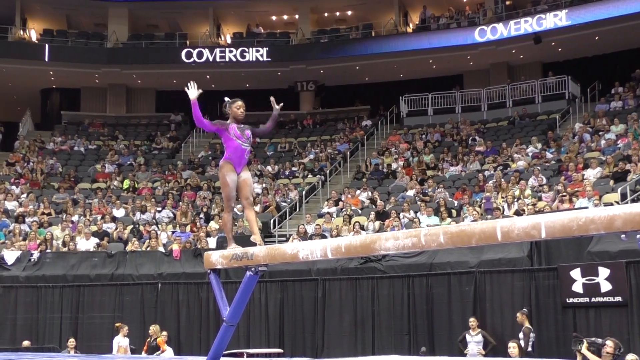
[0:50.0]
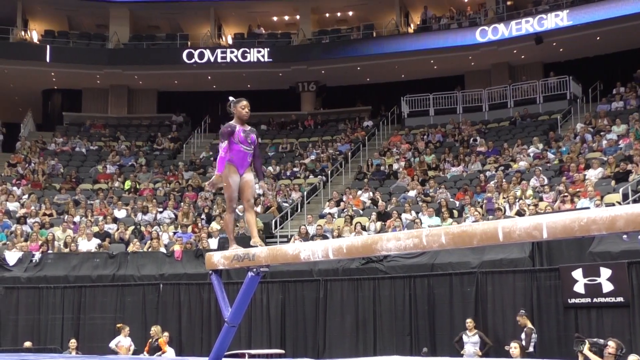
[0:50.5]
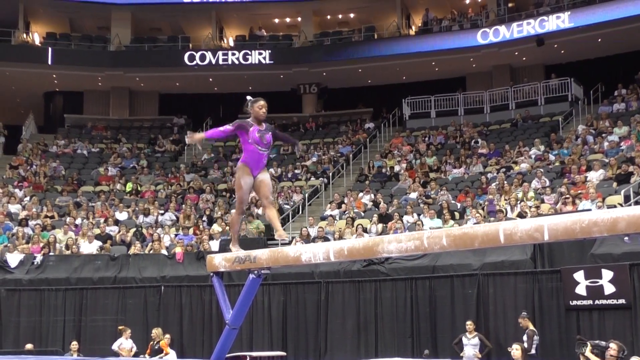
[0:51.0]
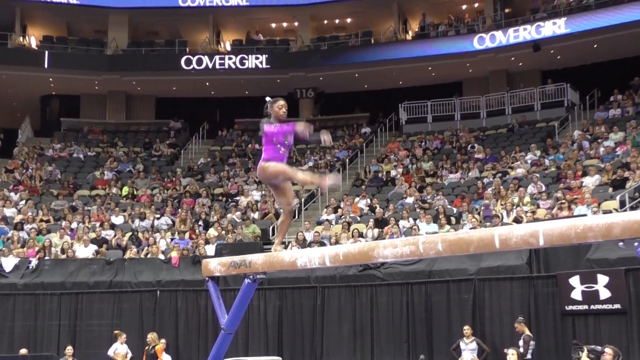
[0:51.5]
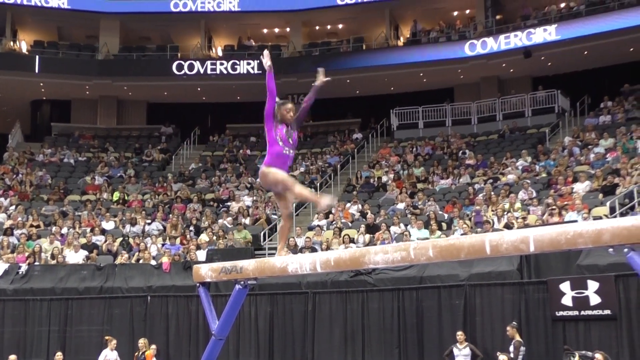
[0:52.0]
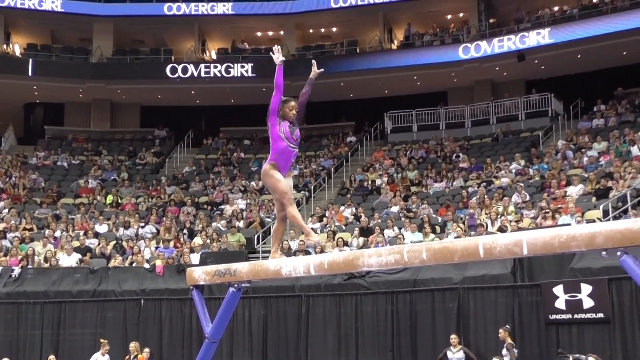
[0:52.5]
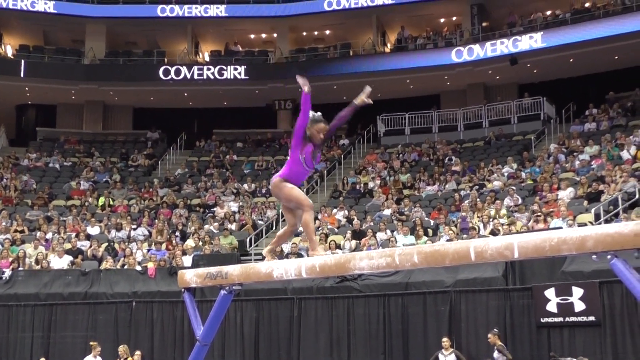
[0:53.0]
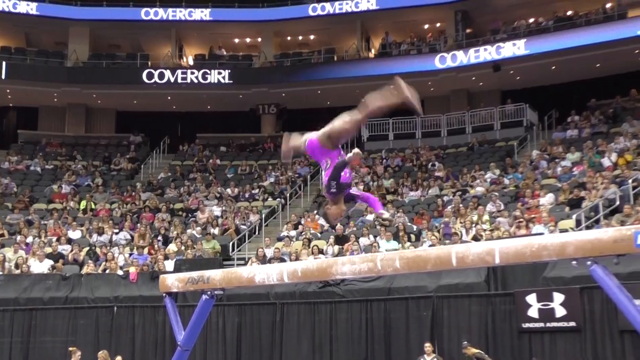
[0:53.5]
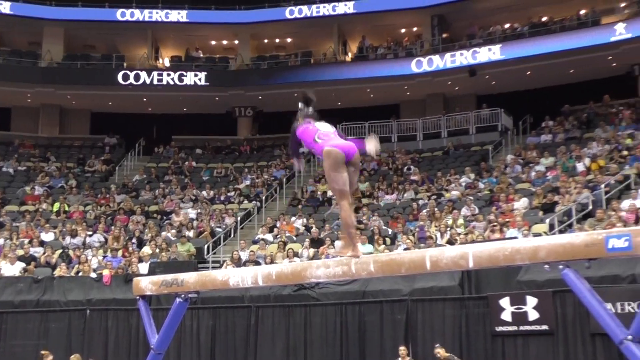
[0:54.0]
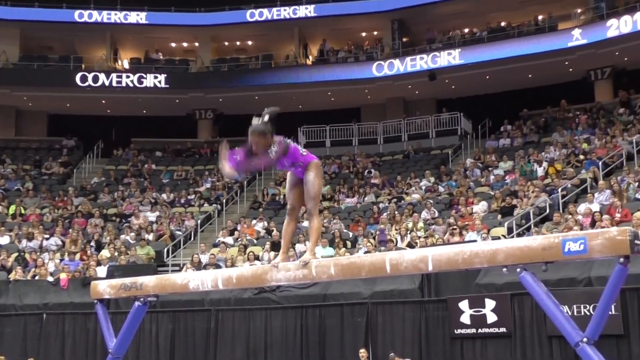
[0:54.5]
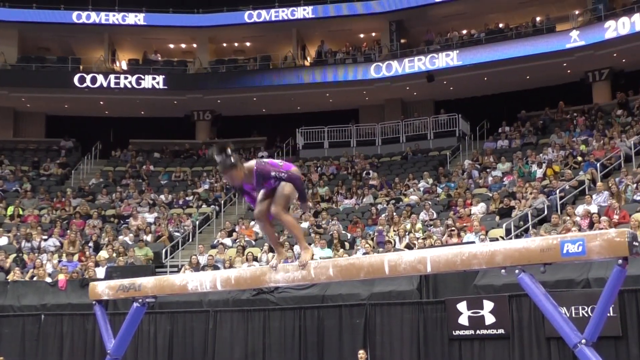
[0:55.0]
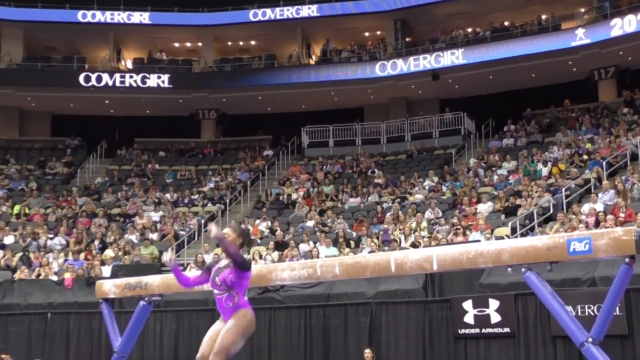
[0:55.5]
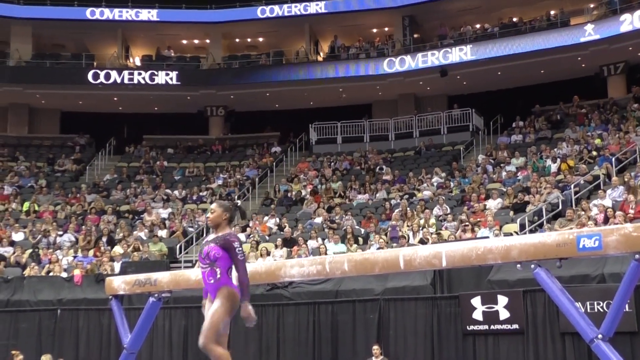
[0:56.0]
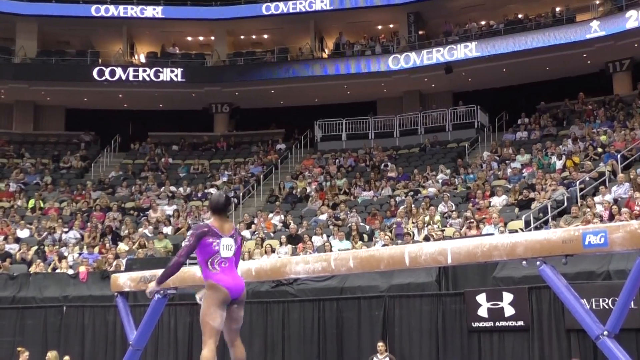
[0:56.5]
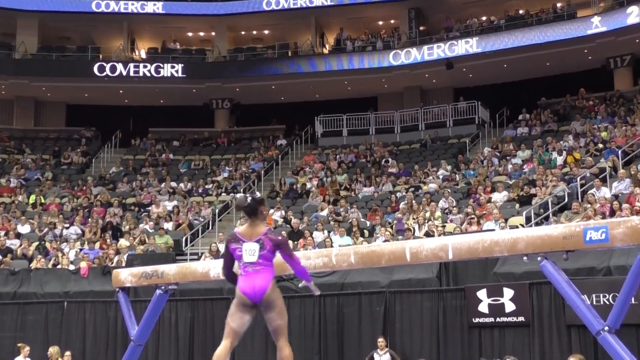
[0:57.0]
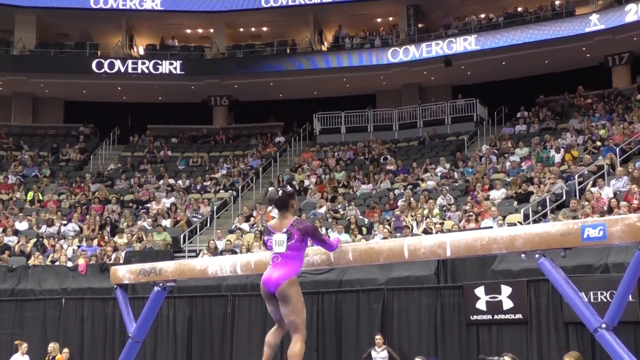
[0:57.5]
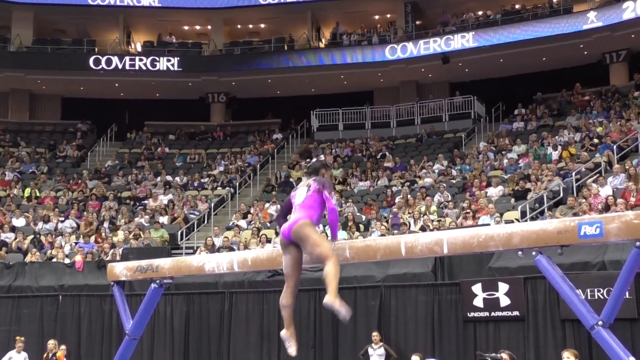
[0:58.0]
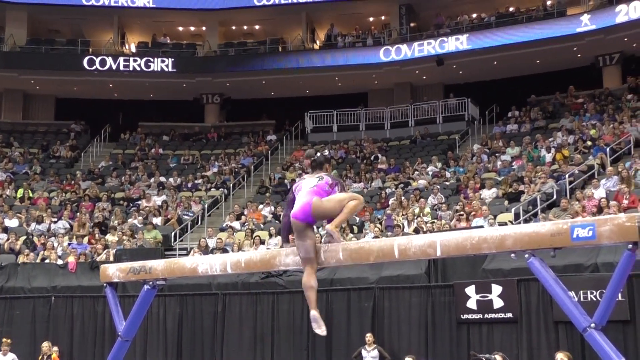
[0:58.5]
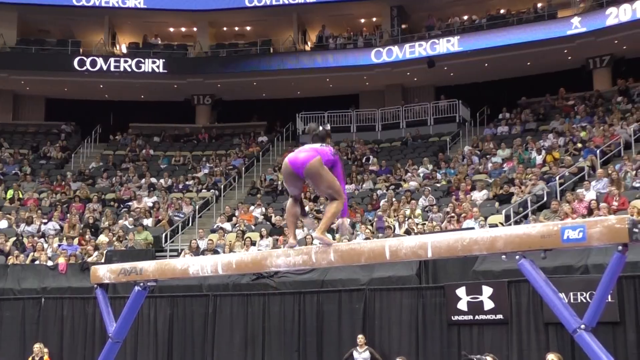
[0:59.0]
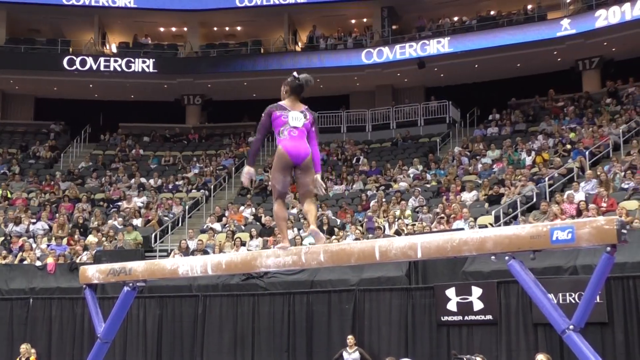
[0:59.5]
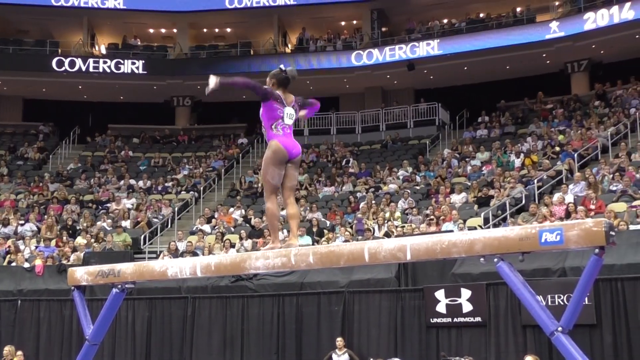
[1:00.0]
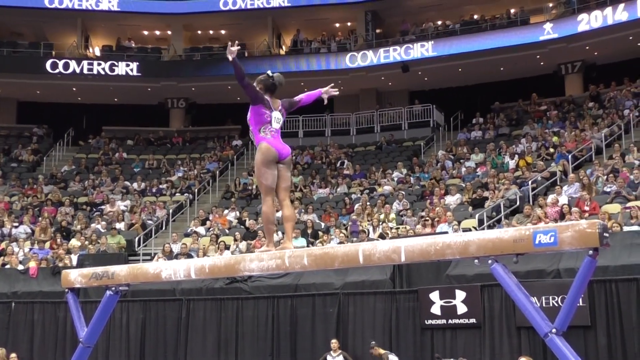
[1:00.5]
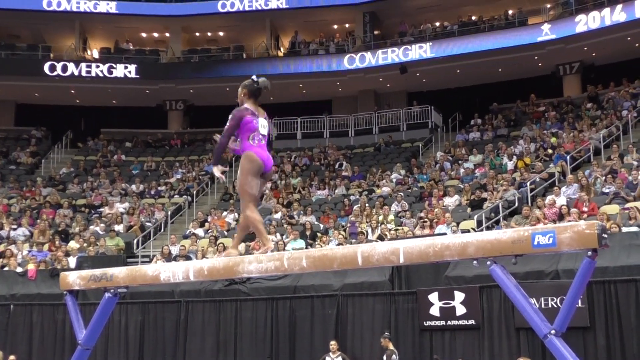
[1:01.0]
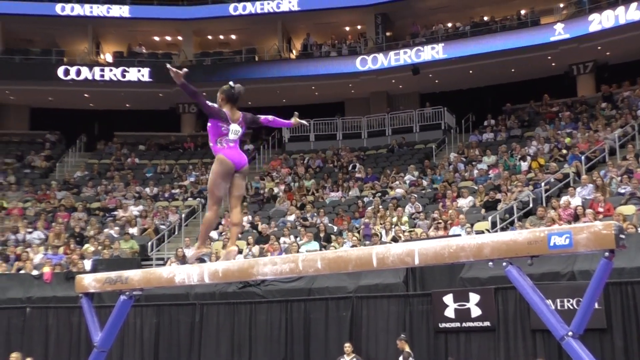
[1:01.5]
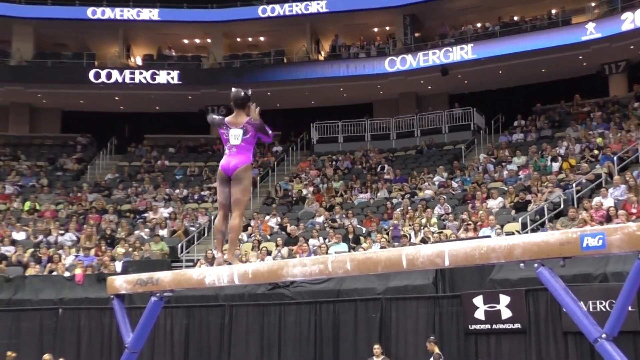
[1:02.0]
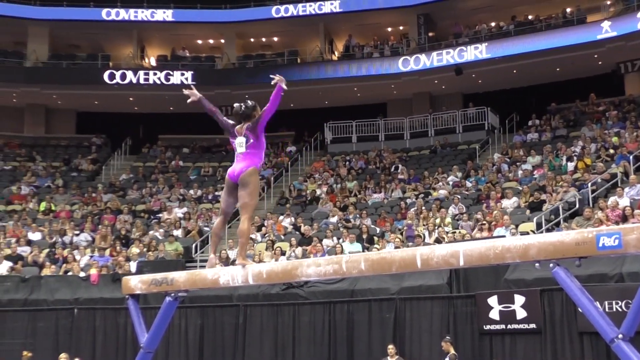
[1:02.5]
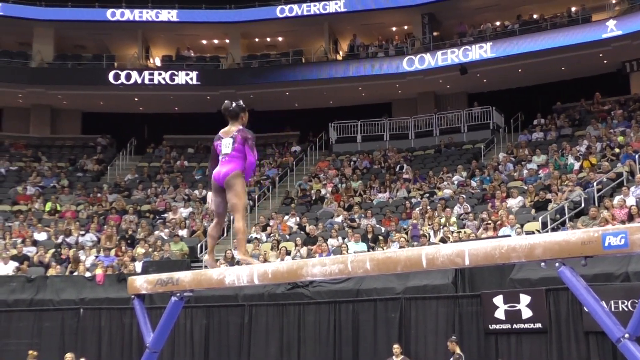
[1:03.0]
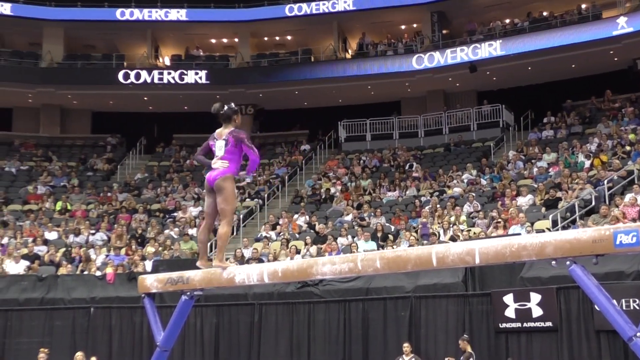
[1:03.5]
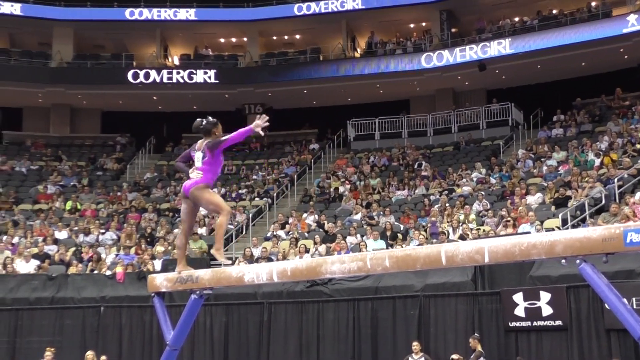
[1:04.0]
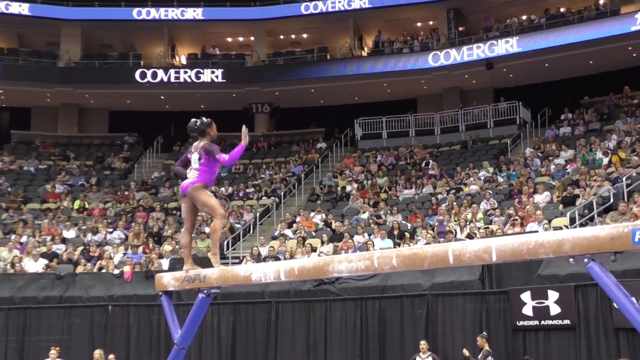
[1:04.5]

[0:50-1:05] She does a jump with one leg parallel, then an aerial or a cartwheel without hands, which causes her balance to abruptly shift from one side to the other. She eventually falls off the beam and lands on the mat on both feet, stands for a moment, and brings herself back up onto the beam. She holds her arms out on either side and moves along, this time facing more toward the crowd, making long gestures on either side of her as she moves toward the end of the beam. During the fall, with her back to the camera, a number is visible pinned to the back of her leotard: black lettering on a white piece of paper that says "1102". The beam is brown and heavily covered in white chalk powder.